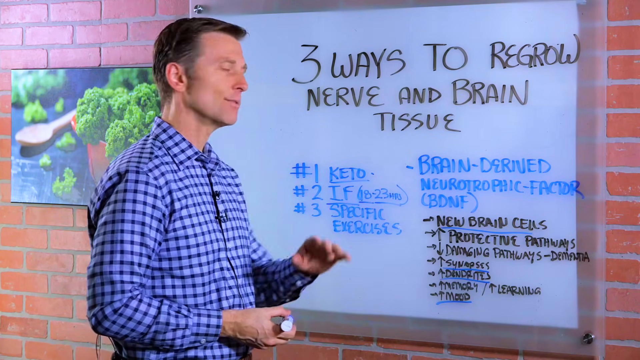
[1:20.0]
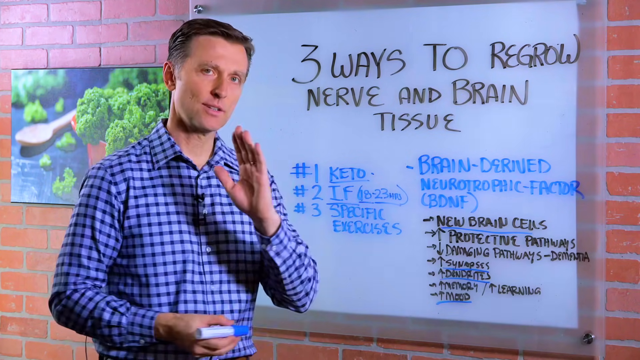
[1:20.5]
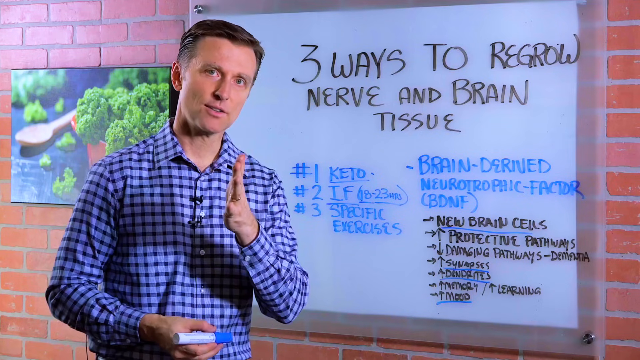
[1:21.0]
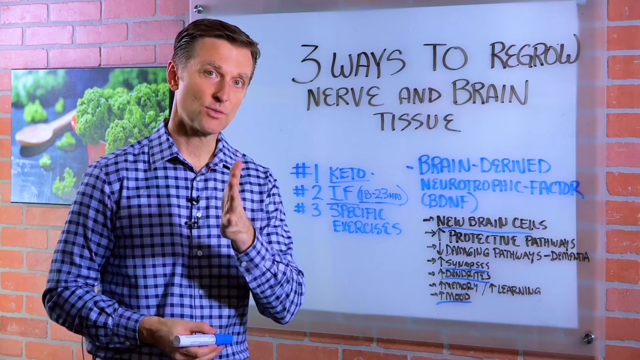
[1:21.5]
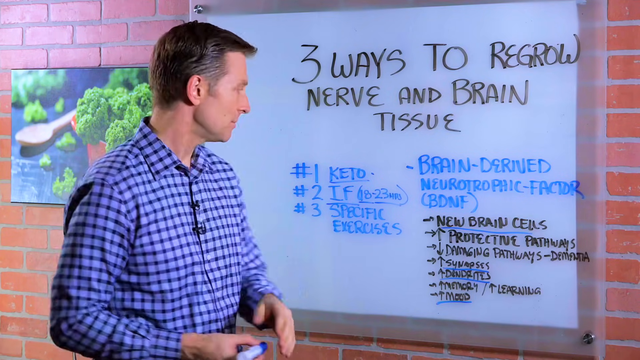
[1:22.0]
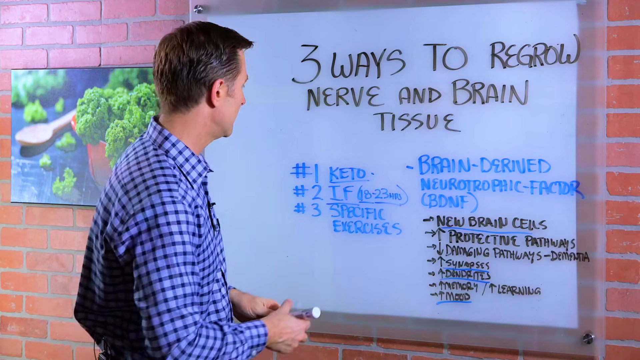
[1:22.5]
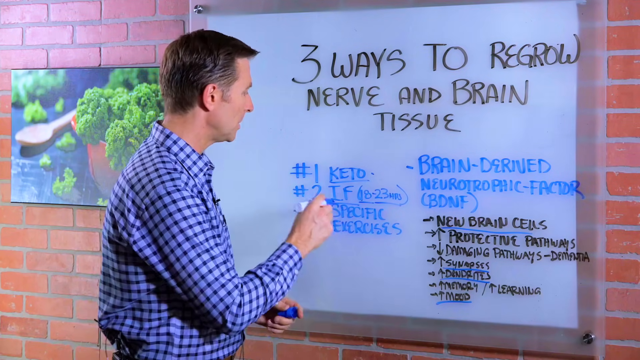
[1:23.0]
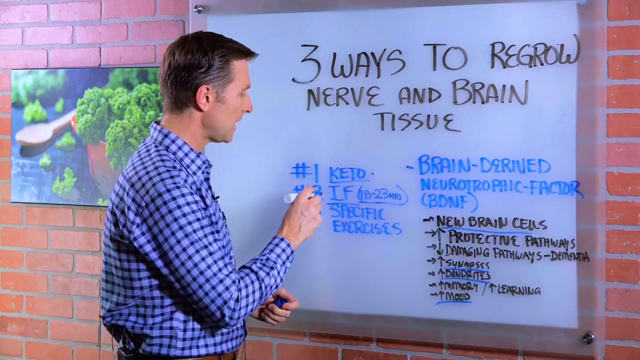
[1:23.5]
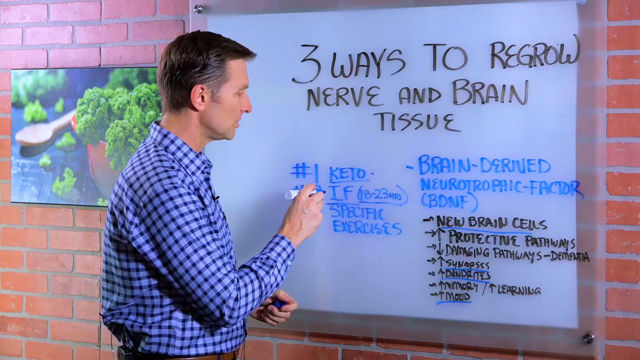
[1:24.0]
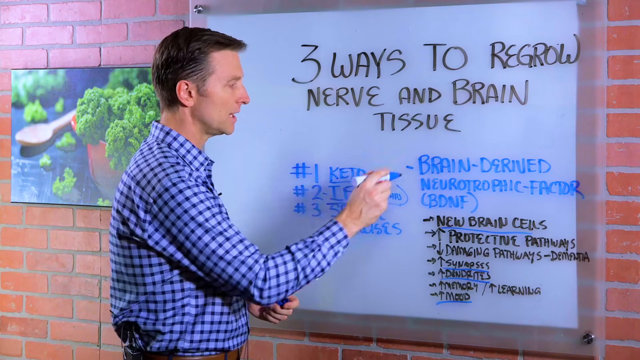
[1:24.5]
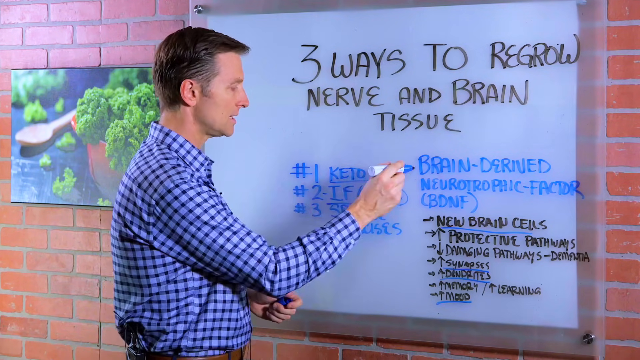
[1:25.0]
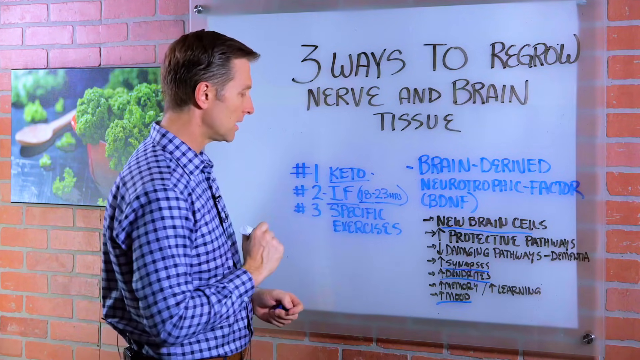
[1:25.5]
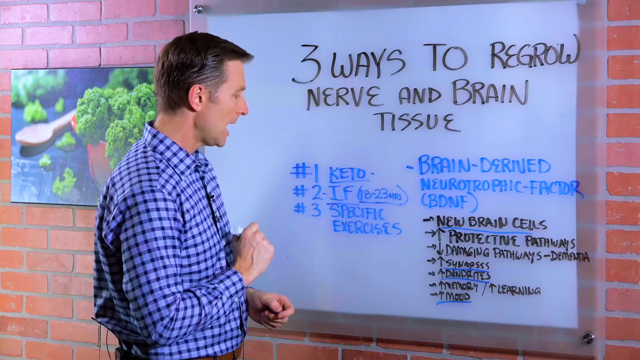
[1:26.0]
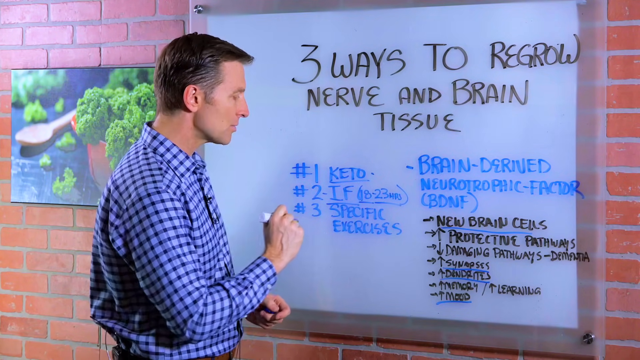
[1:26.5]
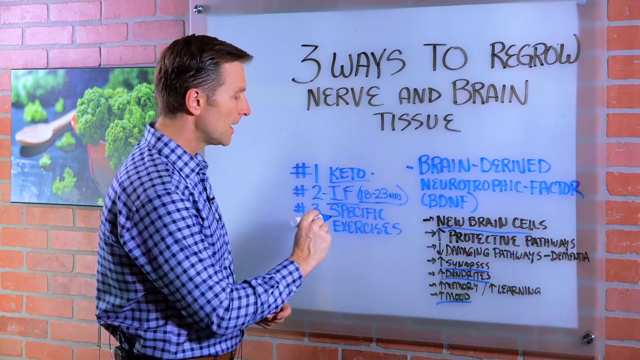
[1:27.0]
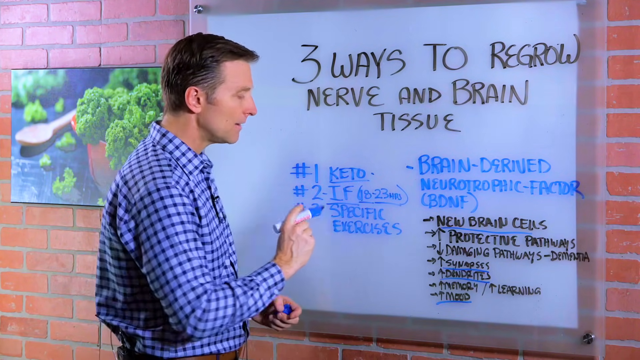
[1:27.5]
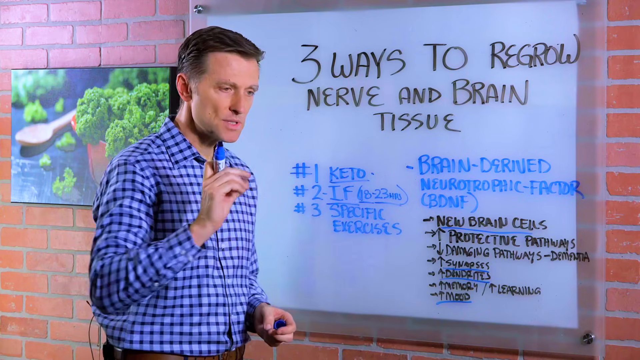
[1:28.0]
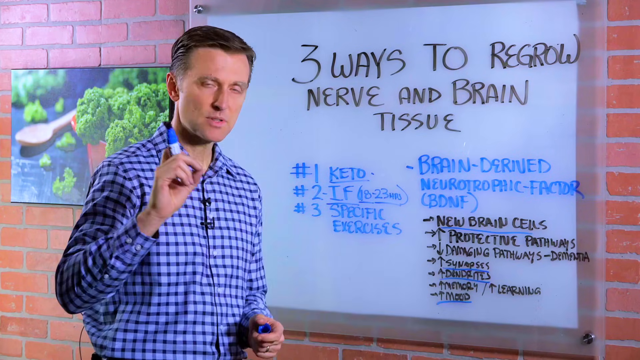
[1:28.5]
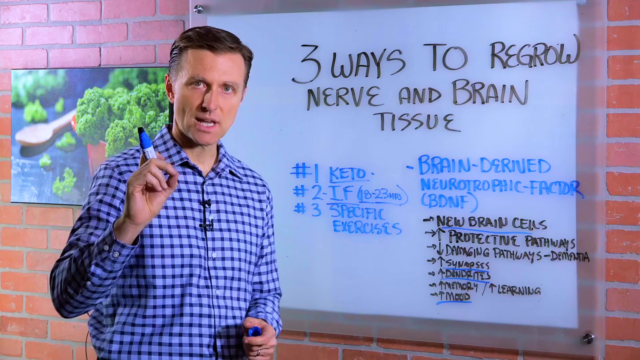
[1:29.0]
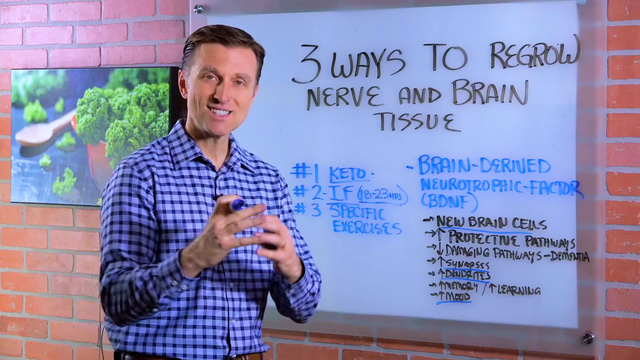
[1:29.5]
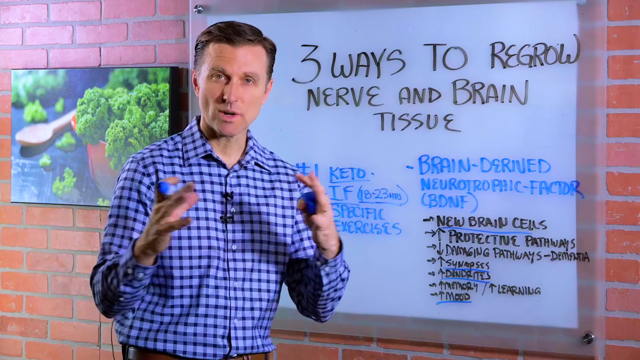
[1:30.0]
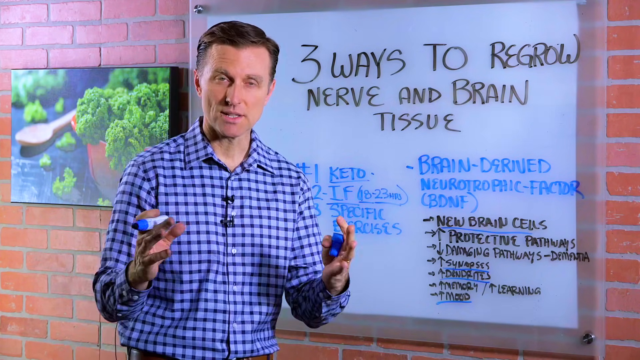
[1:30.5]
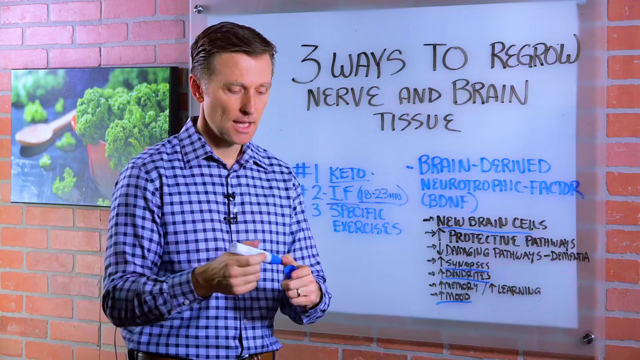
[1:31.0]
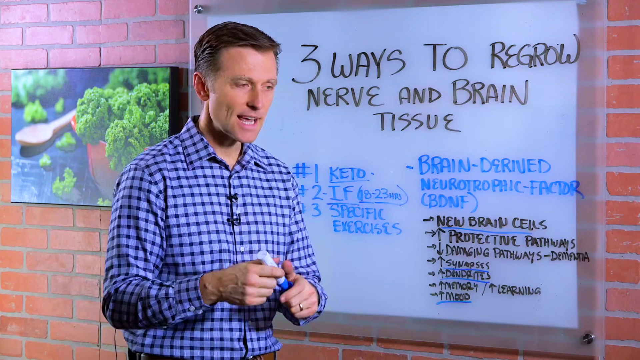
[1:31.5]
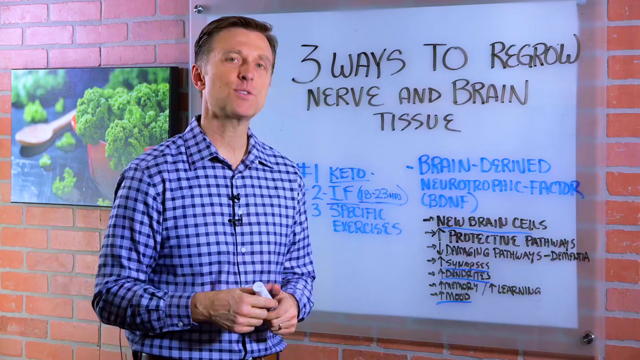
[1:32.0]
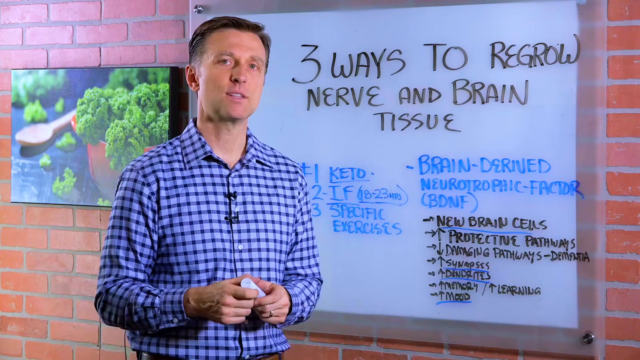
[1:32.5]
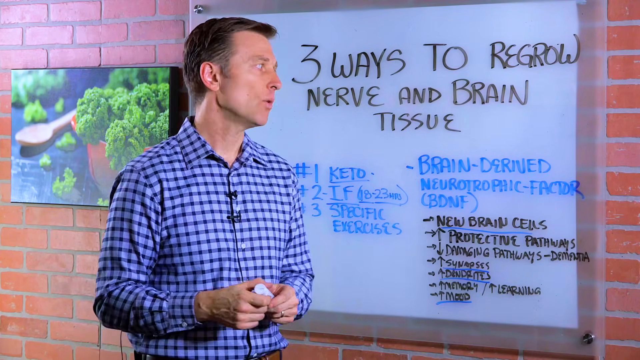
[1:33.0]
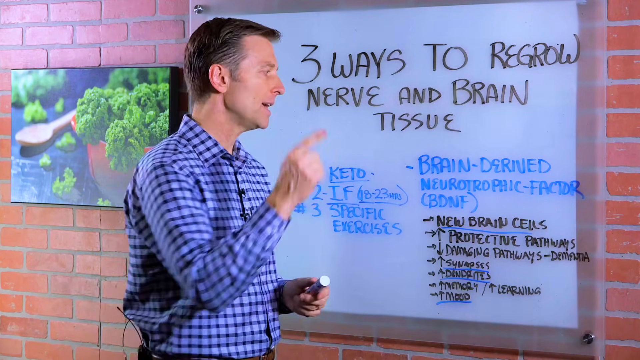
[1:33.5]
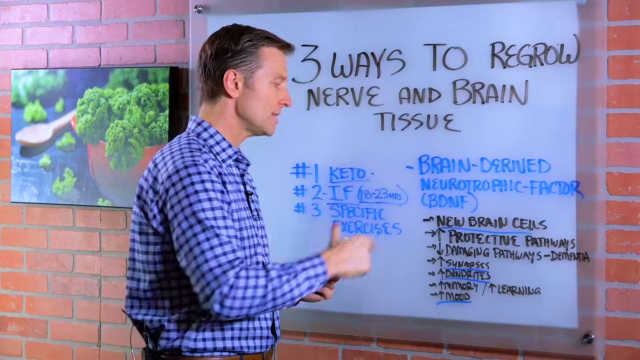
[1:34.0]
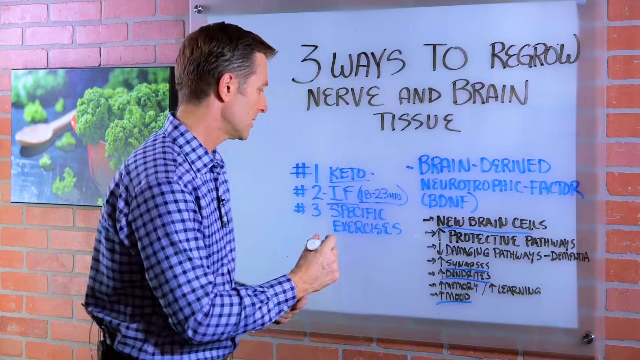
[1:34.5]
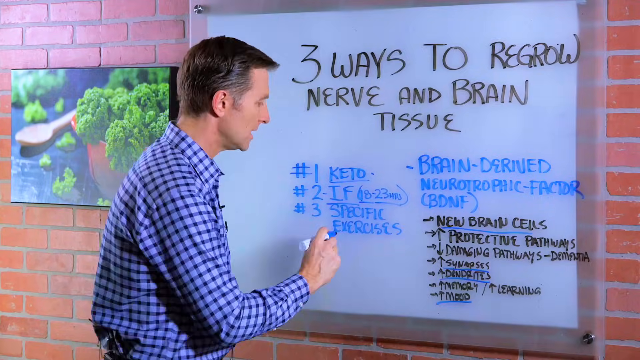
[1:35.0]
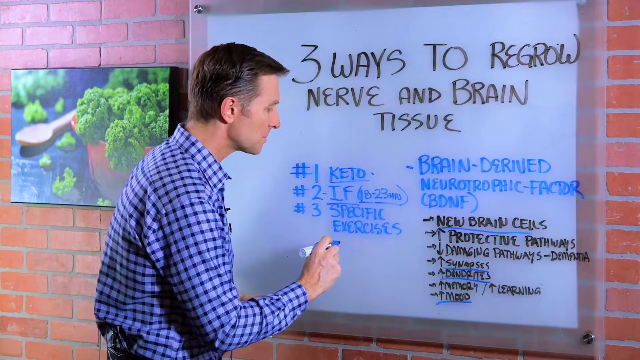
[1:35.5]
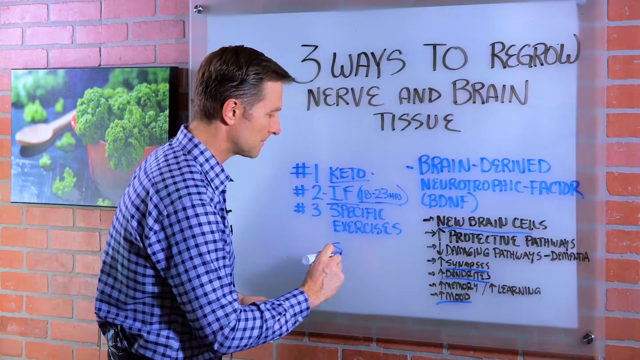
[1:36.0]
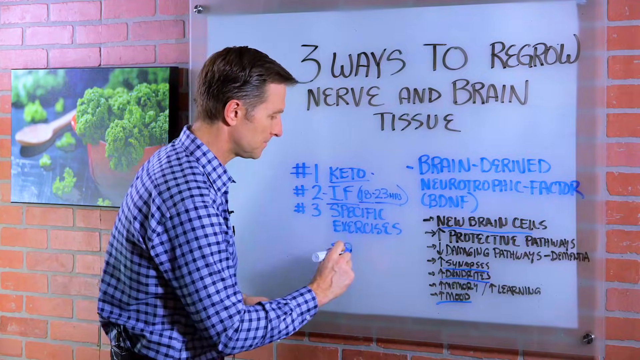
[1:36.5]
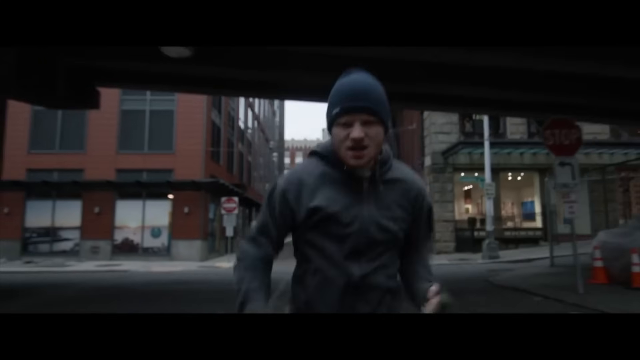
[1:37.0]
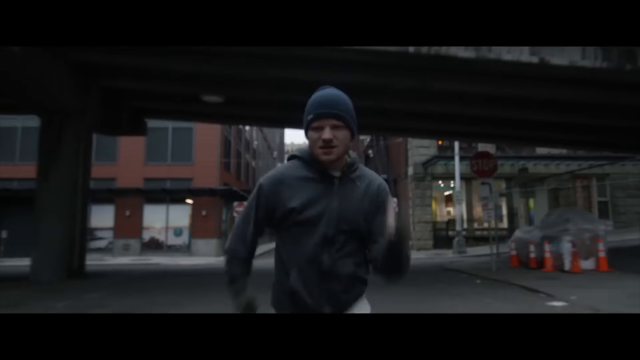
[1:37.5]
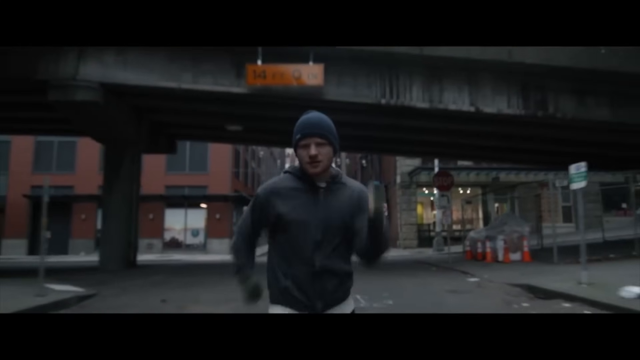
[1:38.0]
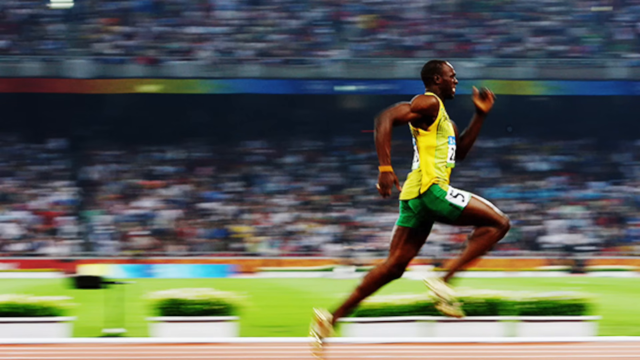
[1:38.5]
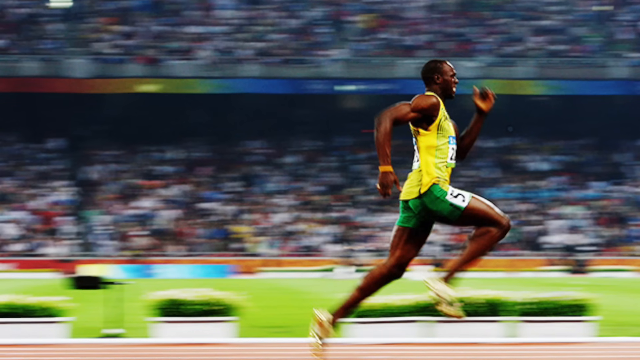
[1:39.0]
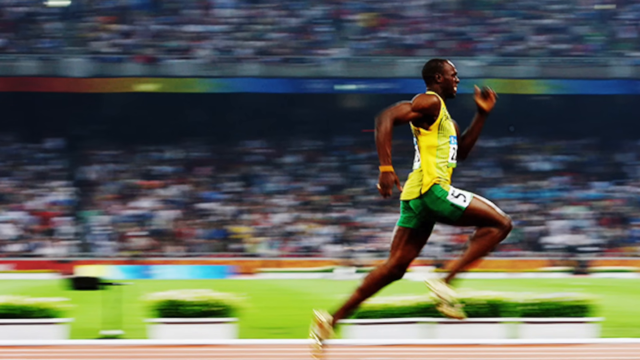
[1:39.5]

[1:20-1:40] A man talks to the camera, then turns around and looks at a whiteboard while holding a blue marker, seemingly talking to the audience, and then looks back and points at the board. A person running very fast is shown, followed by a still picture of Usain Bolt. The man then appears to be about to write something on the board. The whiteboard's title at the top, in black ink, reads "three ways to regrow nerve and brain tissue," and there seem to be many key points along with a numbered list. The board is attached to a brick wall that also has a painting or picture of a green vegetable. The man continues to talk, the video cuts to two men running, and he keeps pointing at the different things written on the whiteboard.